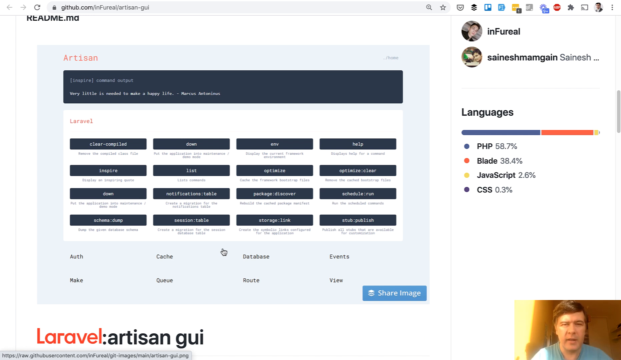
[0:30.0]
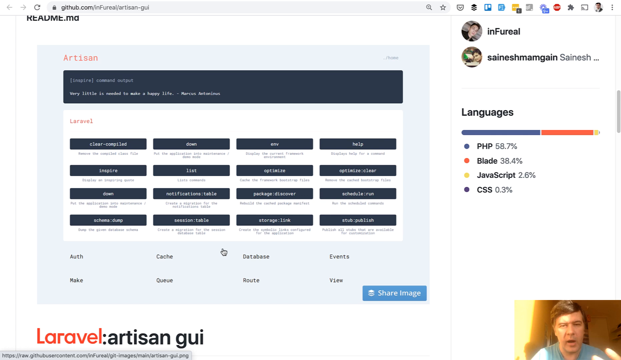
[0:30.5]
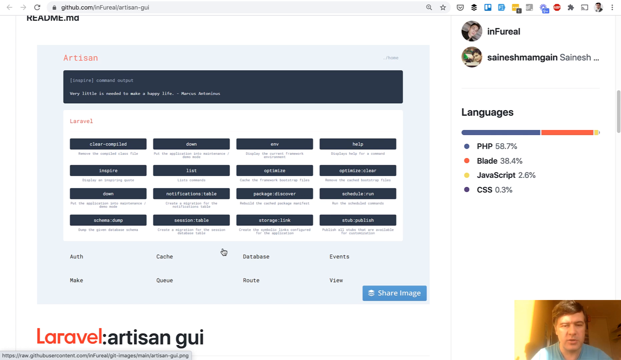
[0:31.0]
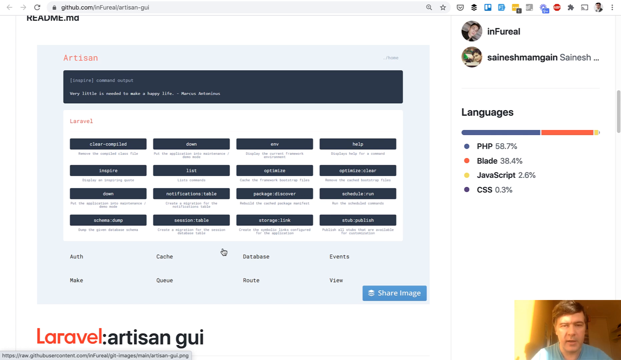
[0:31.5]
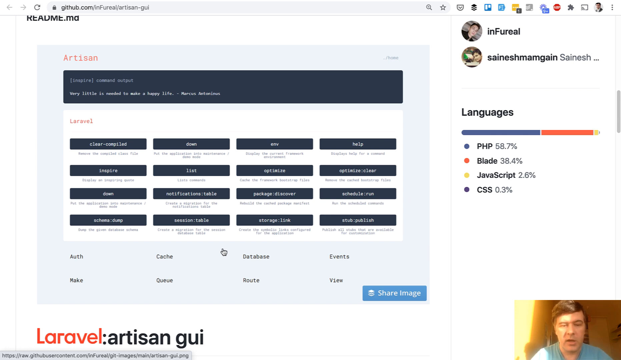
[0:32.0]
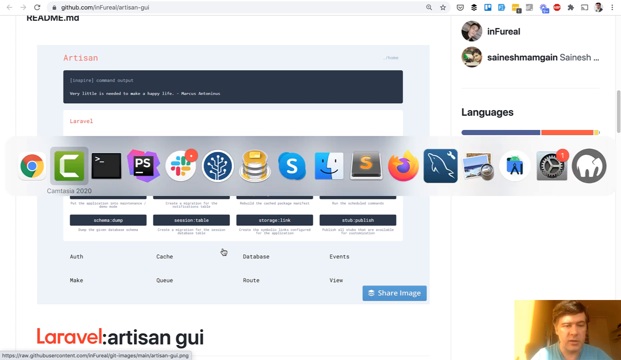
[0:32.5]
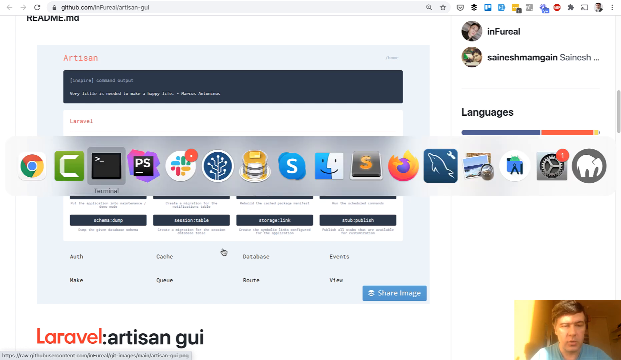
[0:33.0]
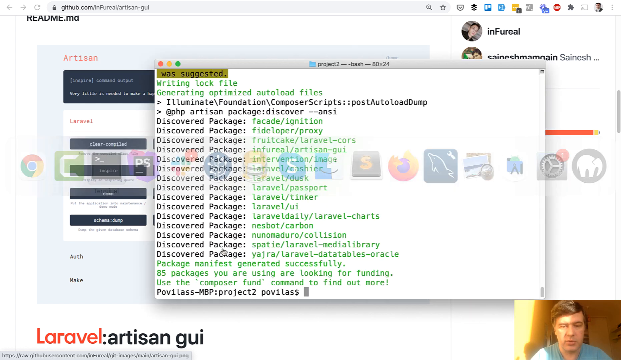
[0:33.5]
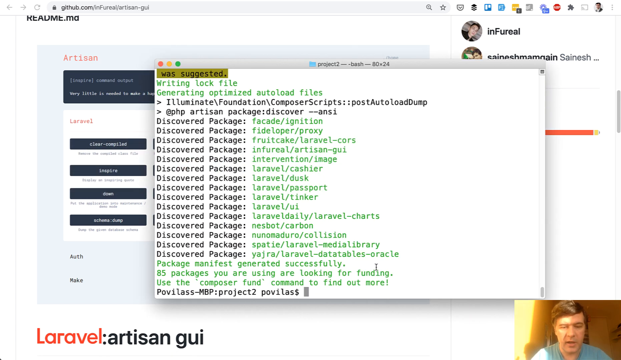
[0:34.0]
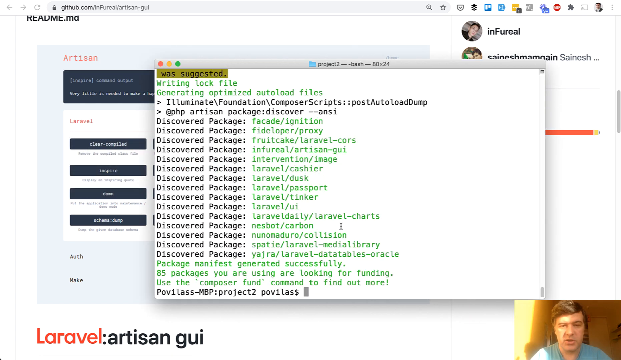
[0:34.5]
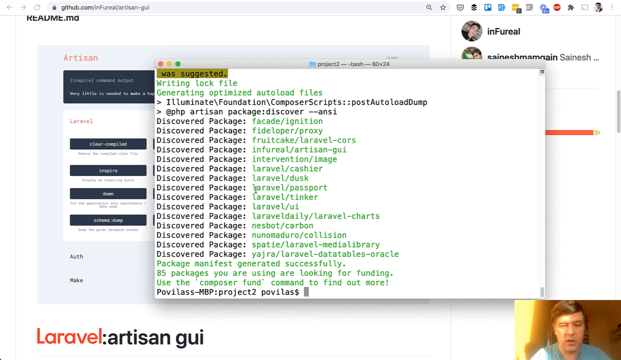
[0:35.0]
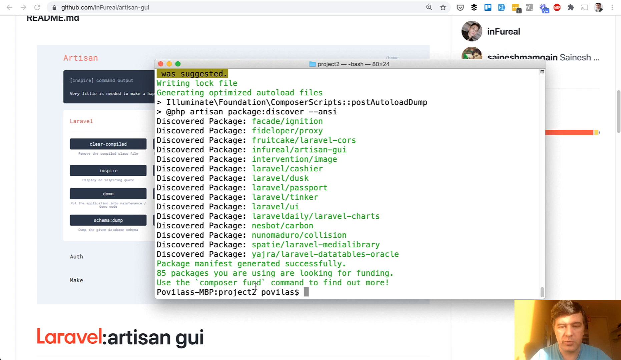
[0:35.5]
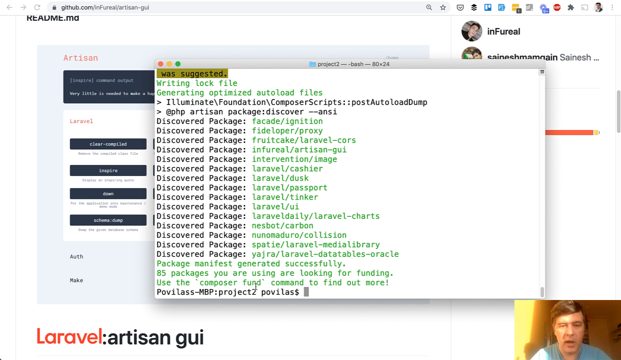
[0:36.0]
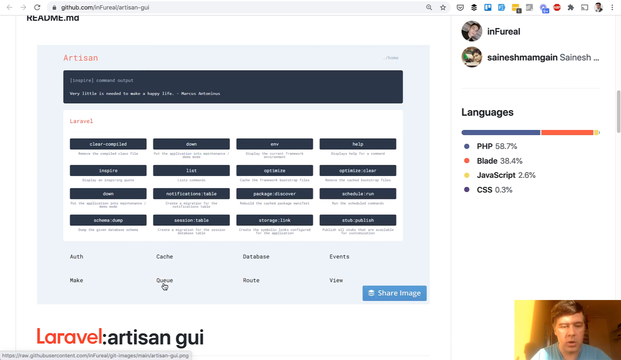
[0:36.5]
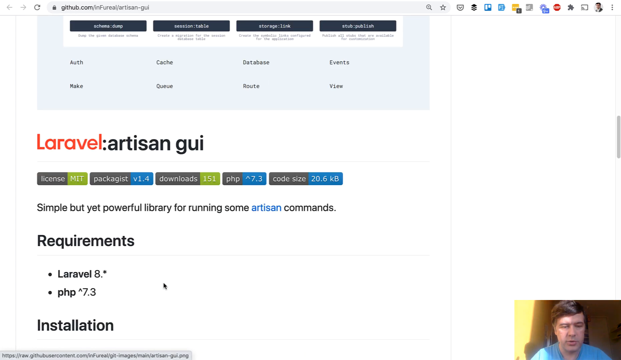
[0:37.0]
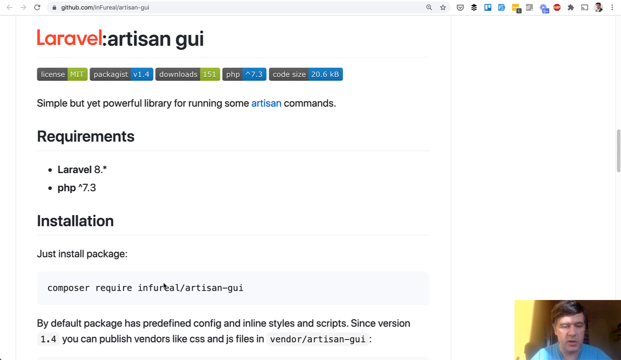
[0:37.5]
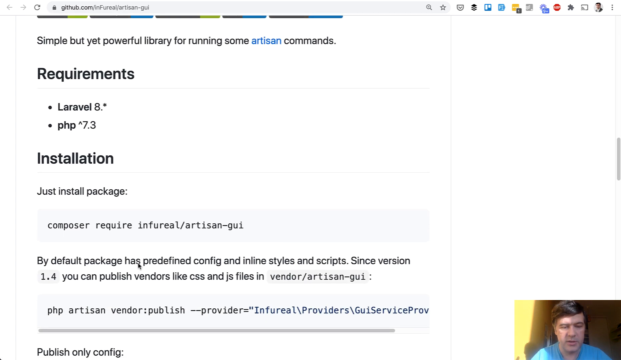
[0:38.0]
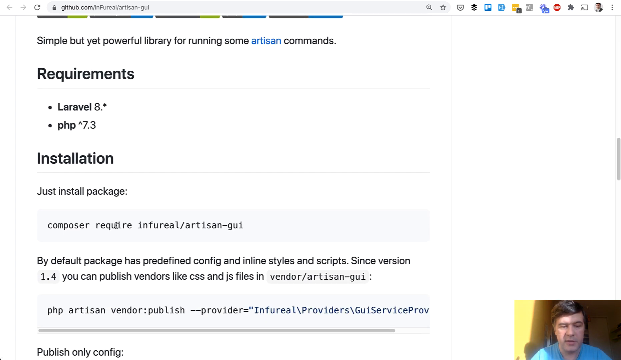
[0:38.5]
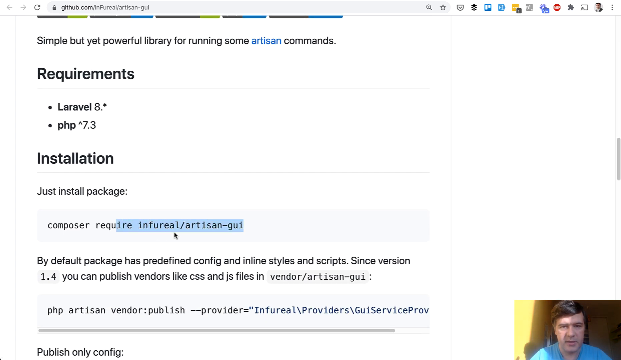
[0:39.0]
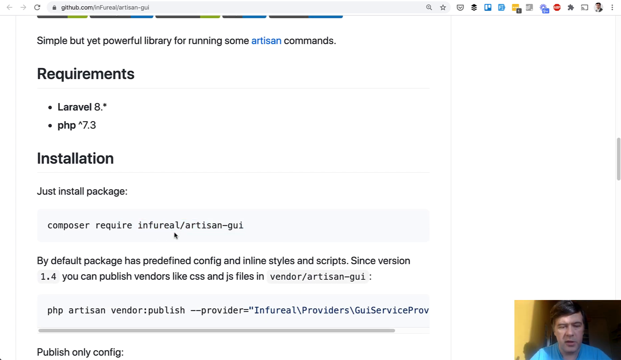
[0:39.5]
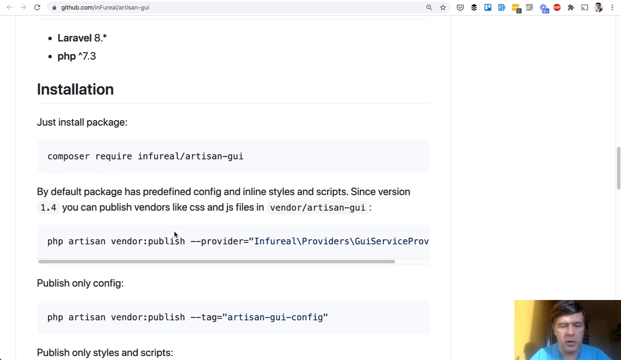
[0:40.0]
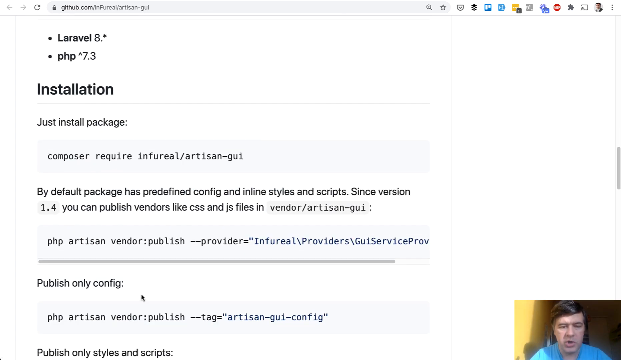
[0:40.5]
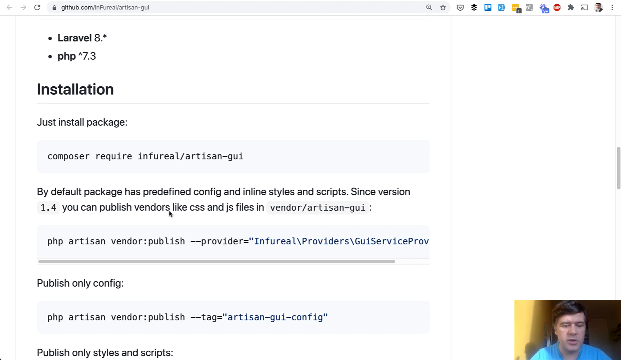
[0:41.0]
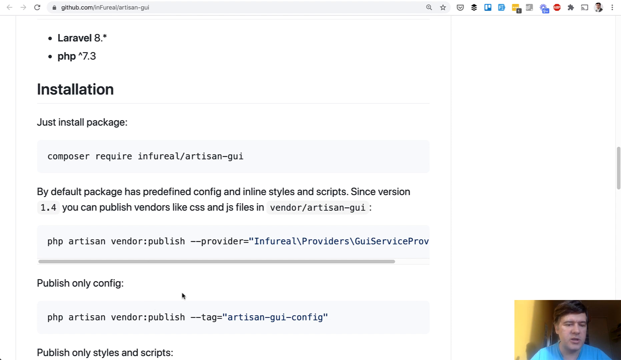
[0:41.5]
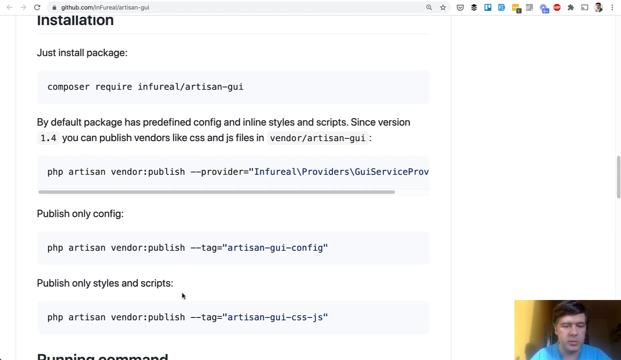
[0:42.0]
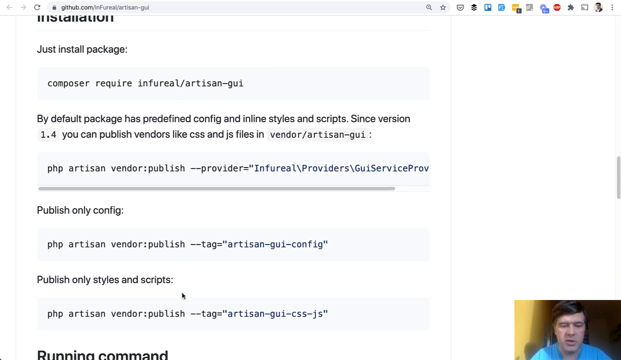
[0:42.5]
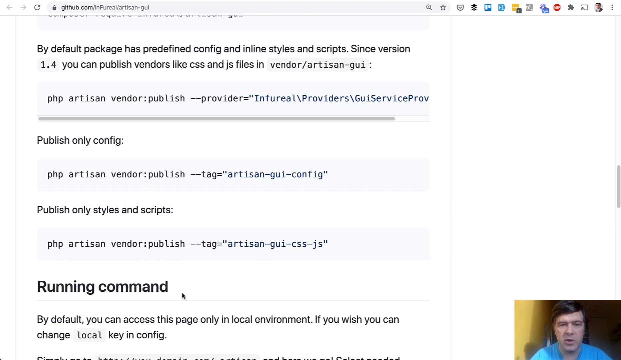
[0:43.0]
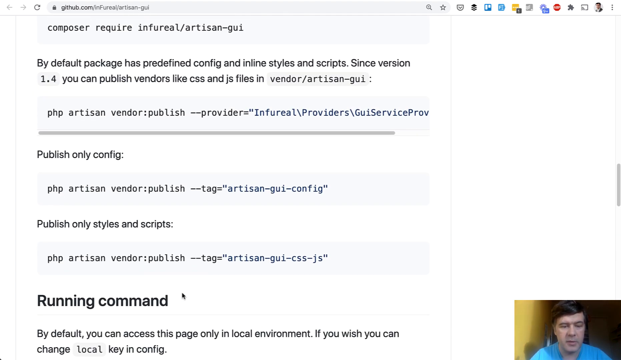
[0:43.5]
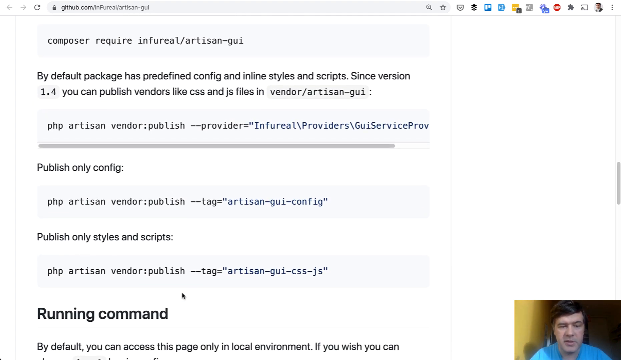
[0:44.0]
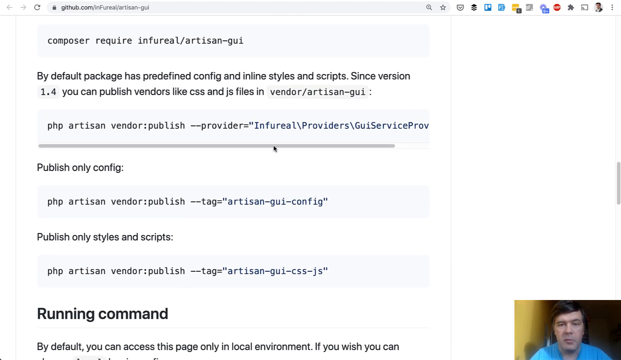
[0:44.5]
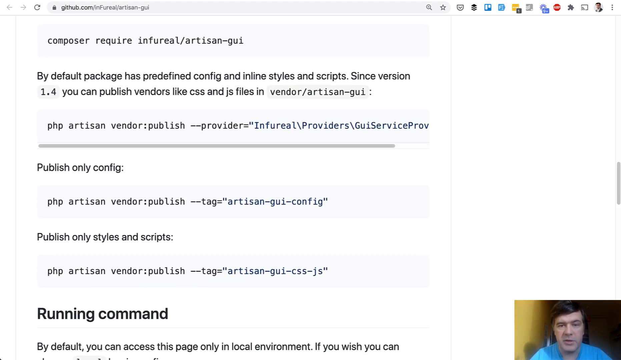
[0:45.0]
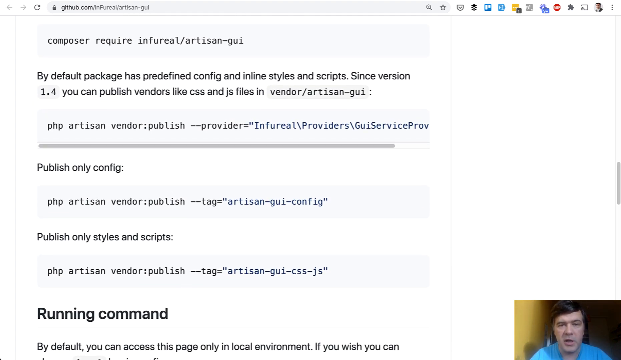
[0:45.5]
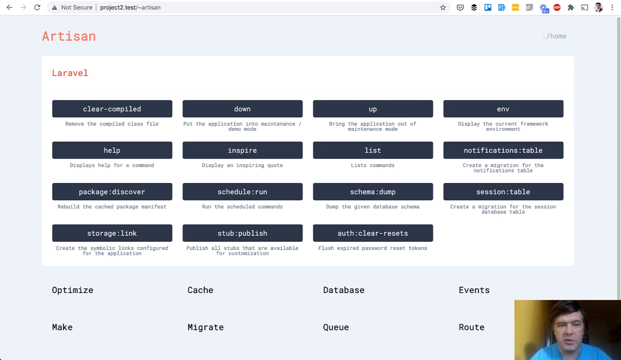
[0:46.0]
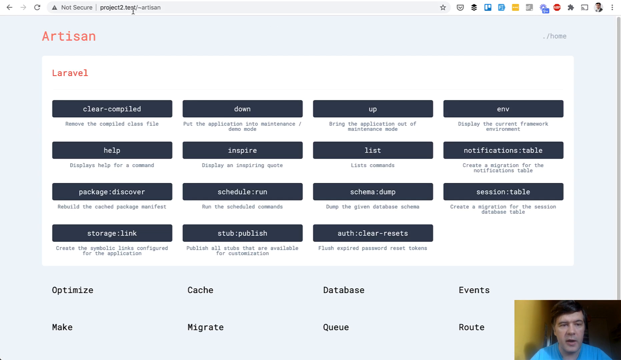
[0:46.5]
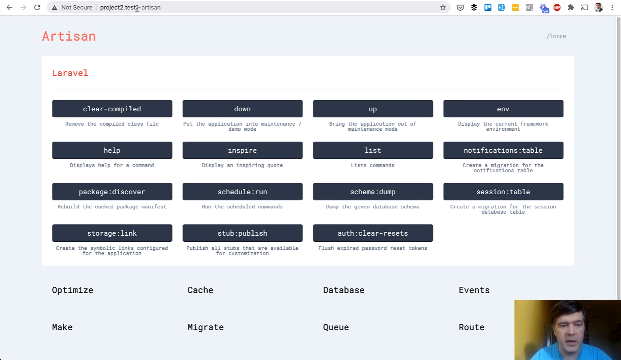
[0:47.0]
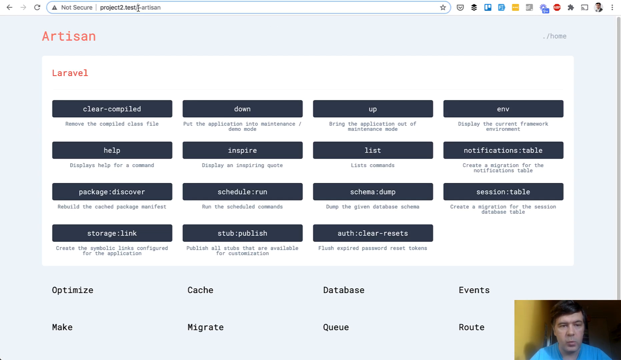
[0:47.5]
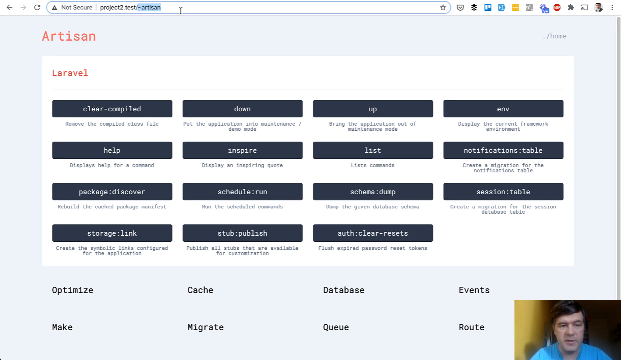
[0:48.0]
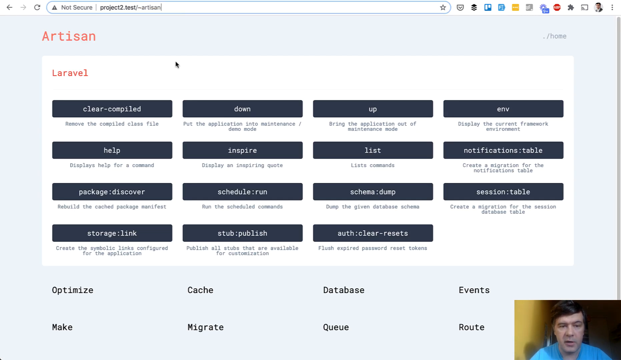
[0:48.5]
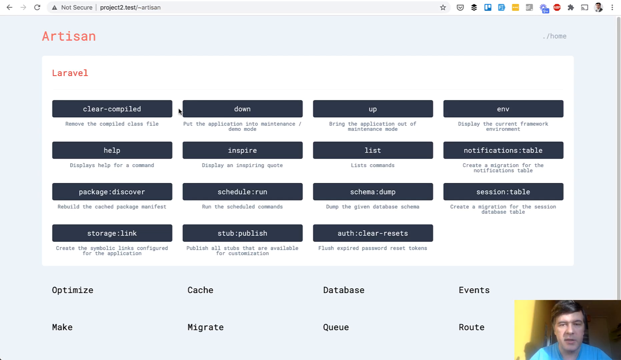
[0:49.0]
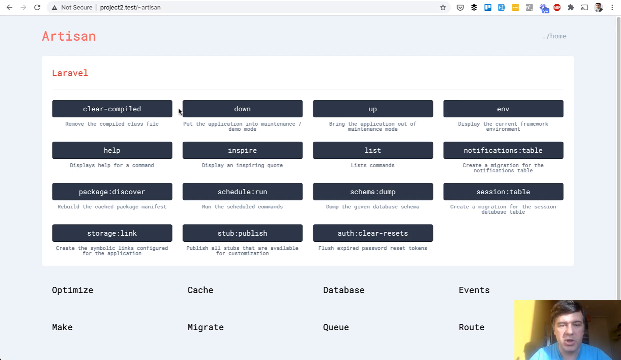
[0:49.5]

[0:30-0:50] The page is about artisan, with languages listed as "PHP," "blade," "JavaScript" and "CSS." The man with brunette hair and a light blue shirt is at the bottom of the screen, apparently in some type of room. Something pops up on the screen mentioning "generating optimized autoload files," "discover package" and "composer scripts." He scrolls down to an installation section with "just install package" and "composer required," followed by text such as "since version 1.4 you can publish vendors like CSS and JS files," "publish only config" and "publish only styles and scripts." He then goes to the top of the page and types something in the search bar.